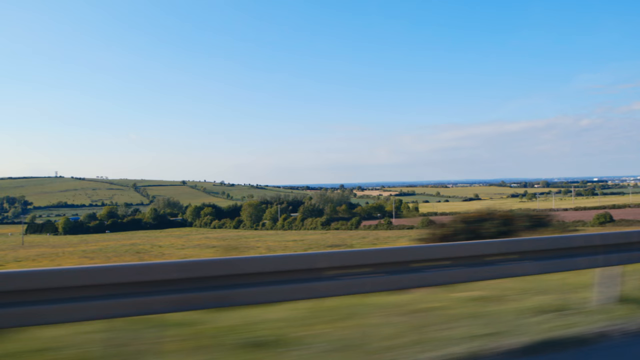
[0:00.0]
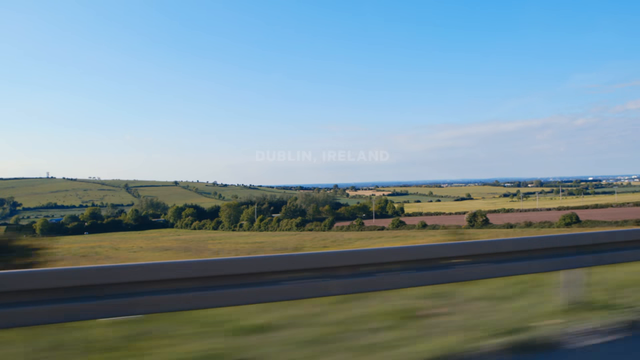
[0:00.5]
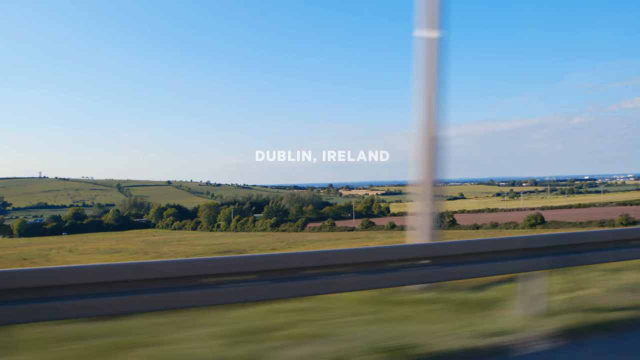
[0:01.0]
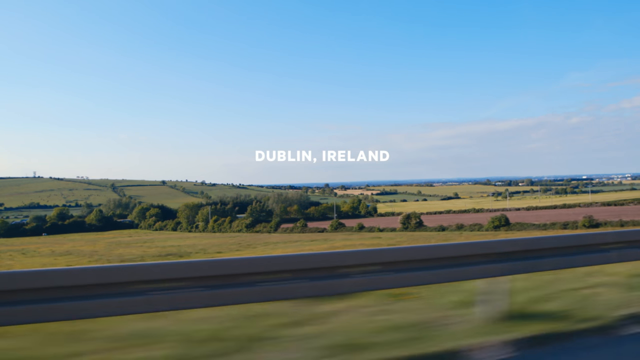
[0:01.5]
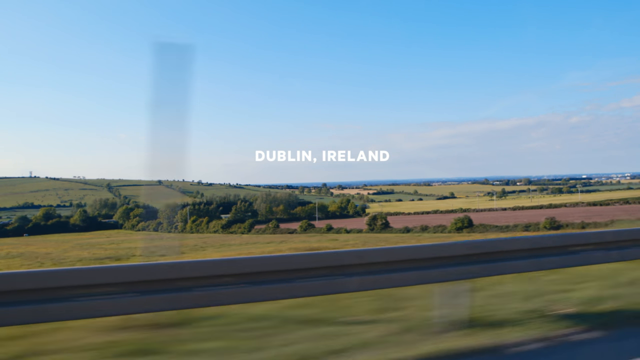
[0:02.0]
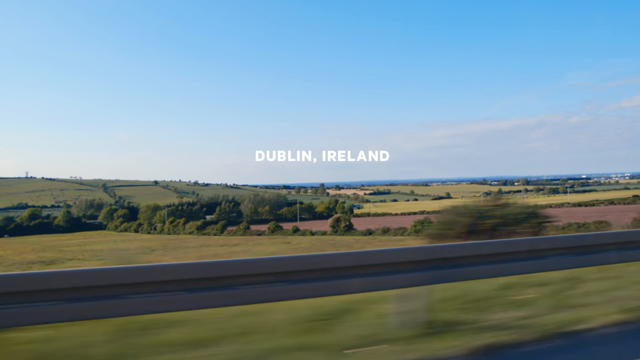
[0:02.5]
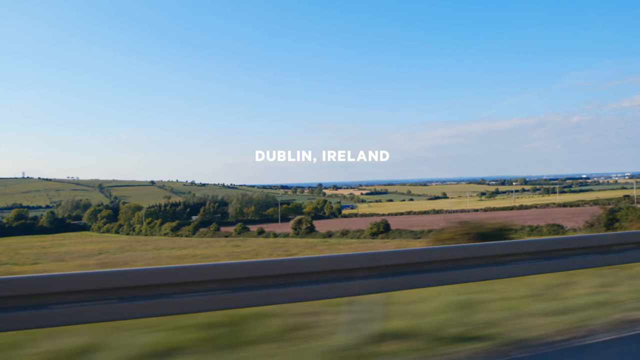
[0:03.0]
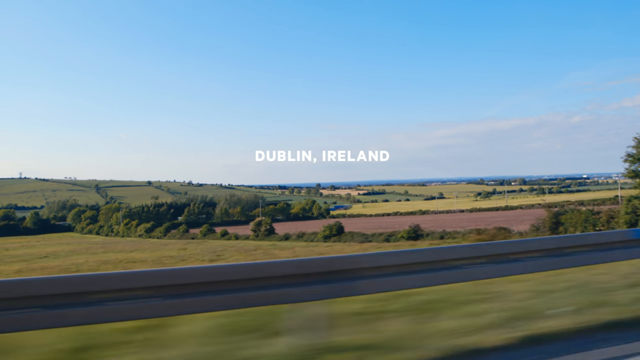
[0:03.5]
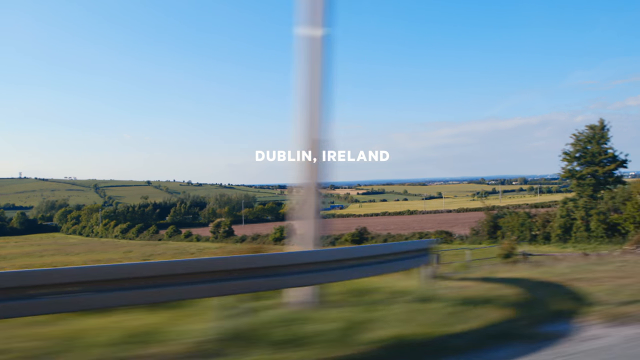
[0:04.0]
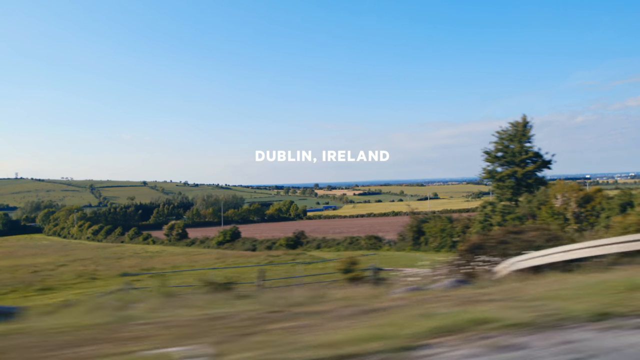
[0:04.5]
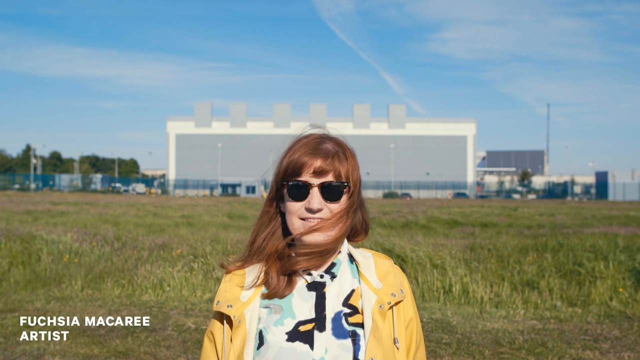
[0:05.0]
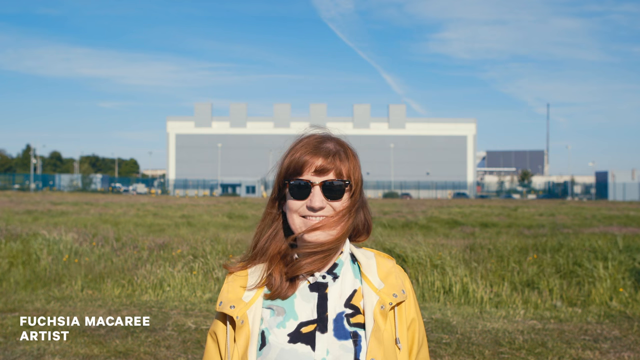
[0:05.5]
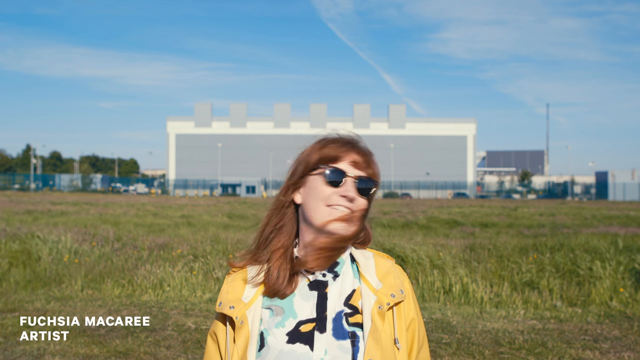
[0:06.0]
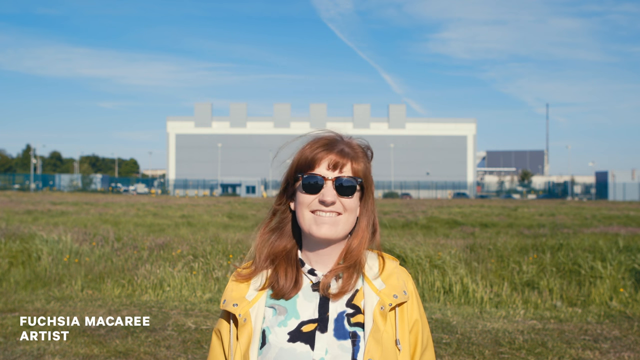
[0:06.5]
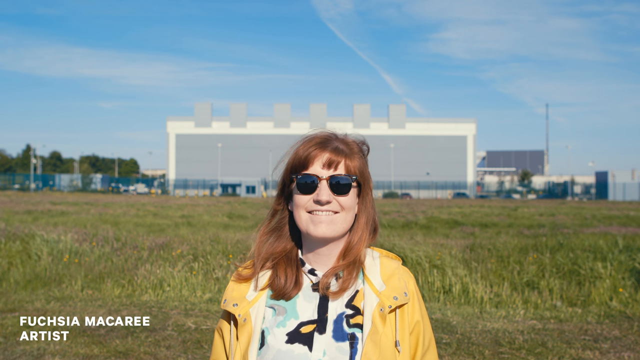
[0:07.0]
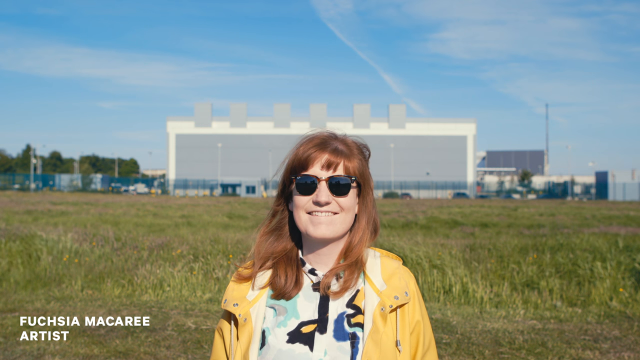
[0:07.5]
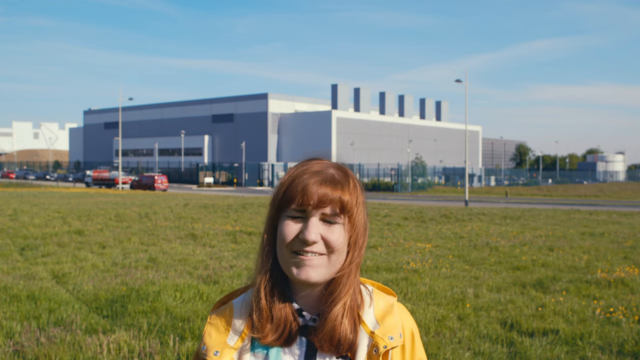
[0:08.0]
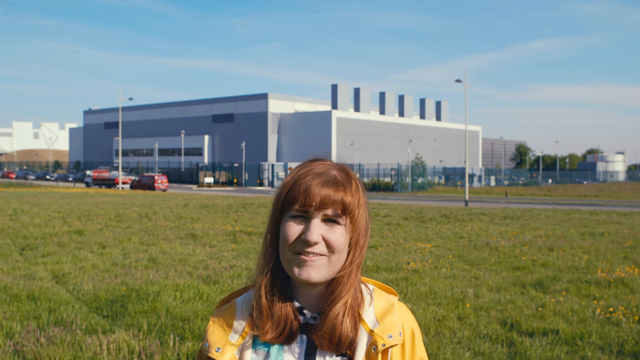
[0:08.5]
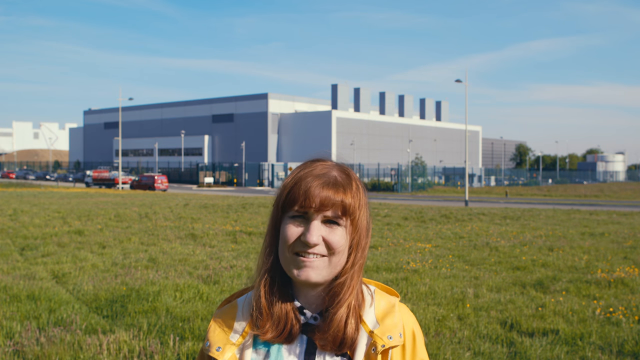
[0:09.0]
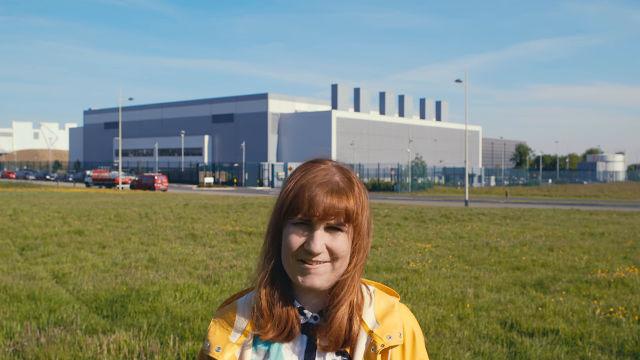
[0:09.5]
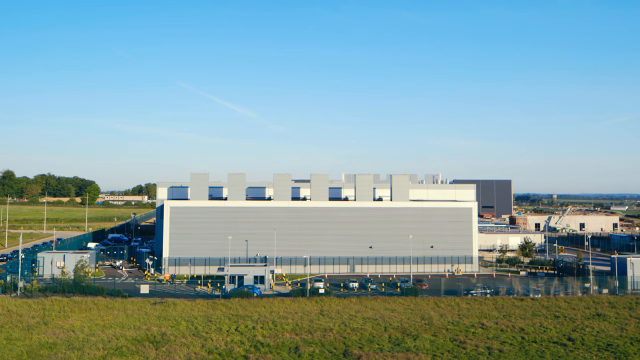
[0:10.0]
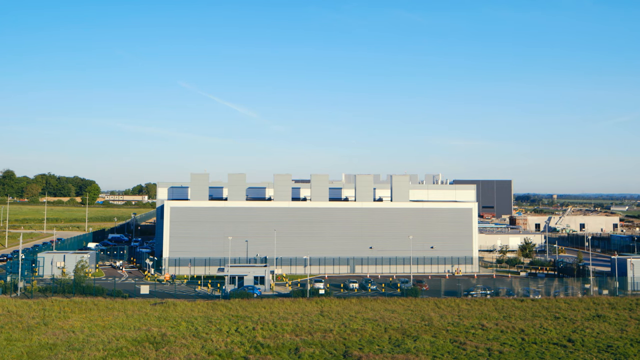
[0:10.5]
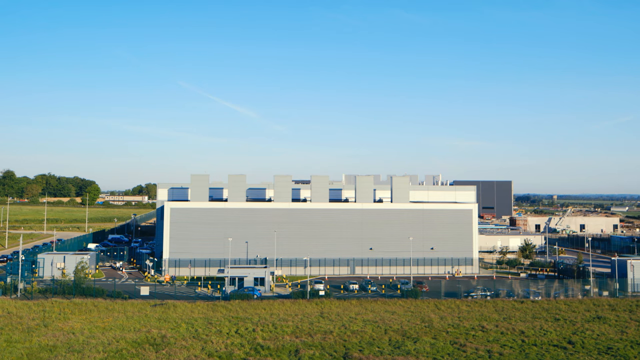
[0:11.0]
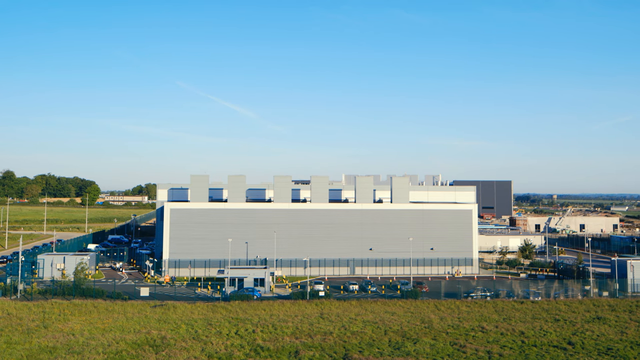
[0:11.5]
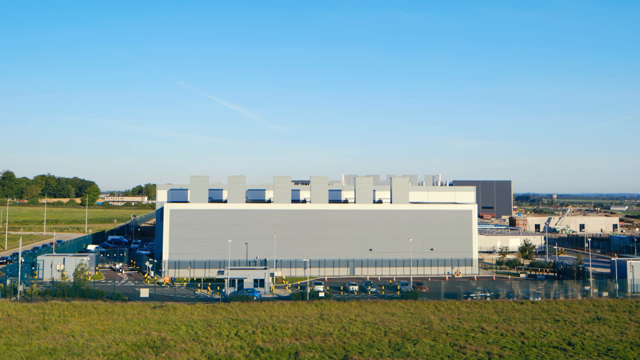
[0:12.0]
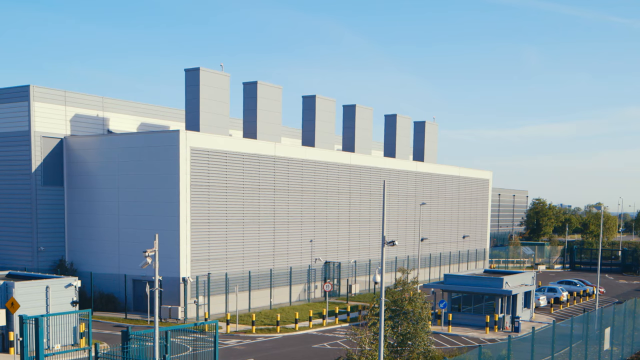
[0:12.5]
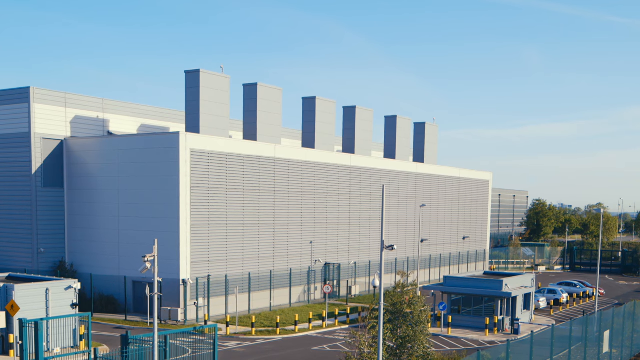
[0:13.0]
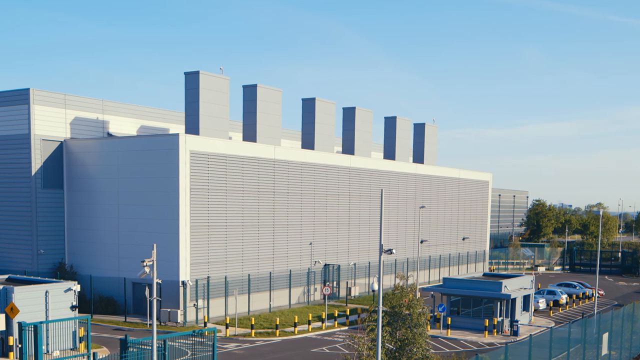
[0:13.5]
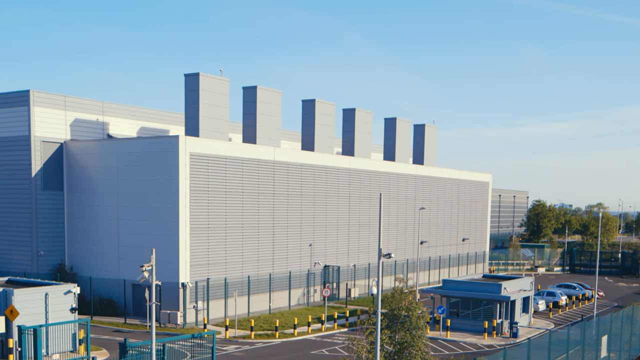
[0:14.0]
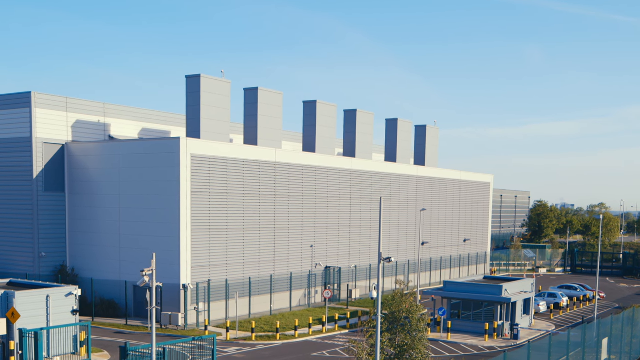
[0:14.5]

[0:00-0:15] The footage appears to be of someone driving, and on-screen text reads "Dublin, Ireland". The car is apparently driving over a bridge, and well-kept grass and hills move past quickly. It is a blue day with white streaking clouds. The Google logo is in the bottom right corner. A woman is then introduced: white text in the bottom left reads "Fuchsia Macquarie", with "artist" below it. She appears to have red hair, wears black sunglasses and a yellow jacket, and looks straight ahead. She speaks briefly, then the camera pans, on what looks like the same day as the opening footage. Behind her is a large gray building with six rectangular structures across the top that almost look like chimneys. A blue fence surrounds the building, and within the fence is a large parking lot with some yellow cones and what looks like a little building for a parking lot attendant.